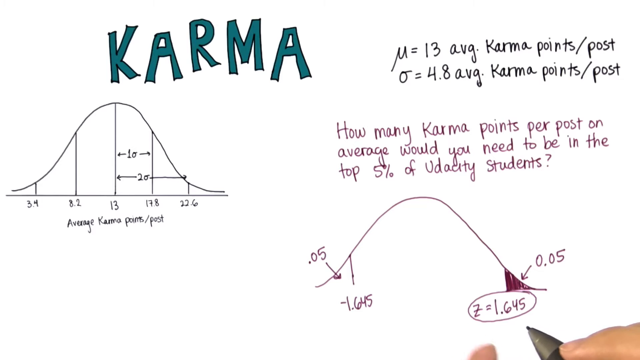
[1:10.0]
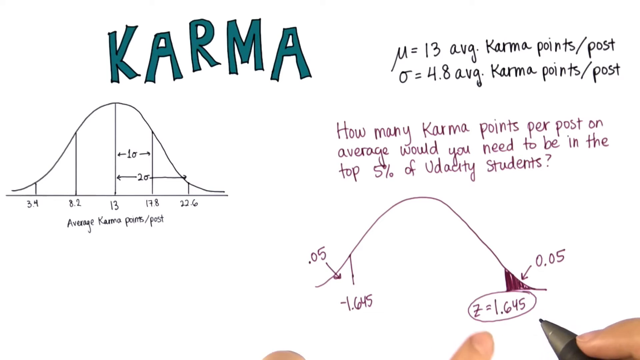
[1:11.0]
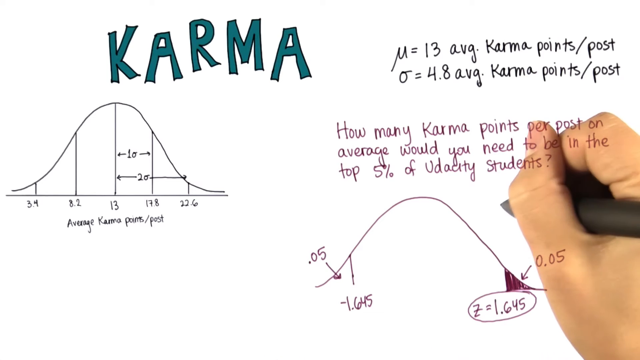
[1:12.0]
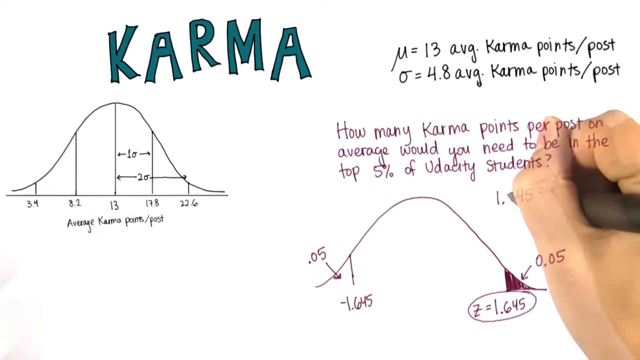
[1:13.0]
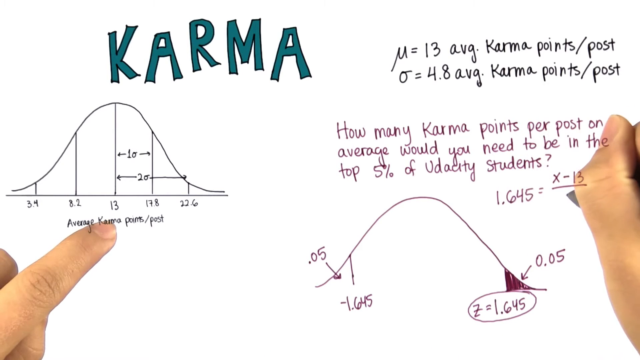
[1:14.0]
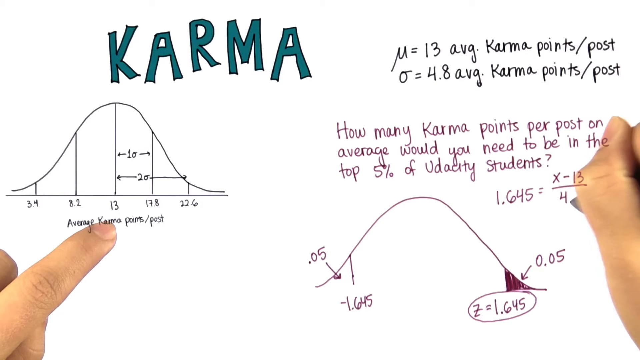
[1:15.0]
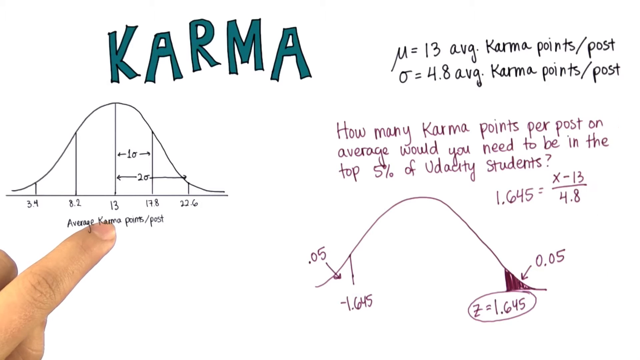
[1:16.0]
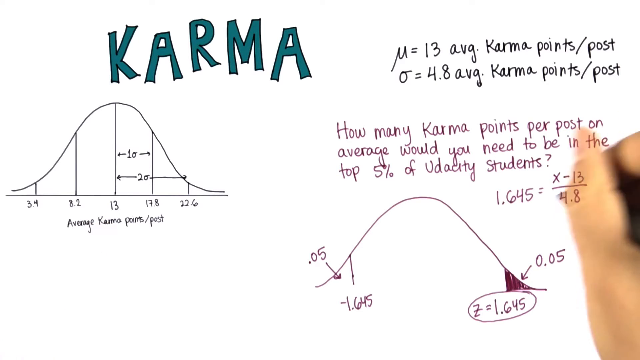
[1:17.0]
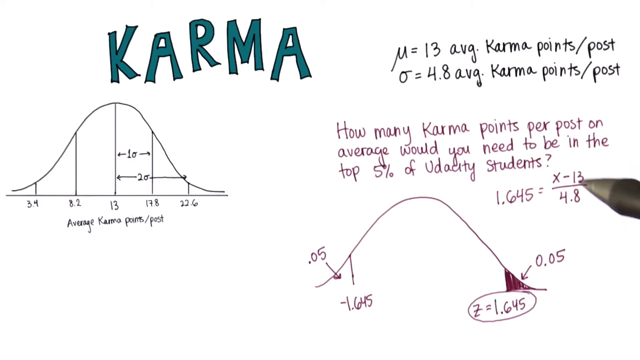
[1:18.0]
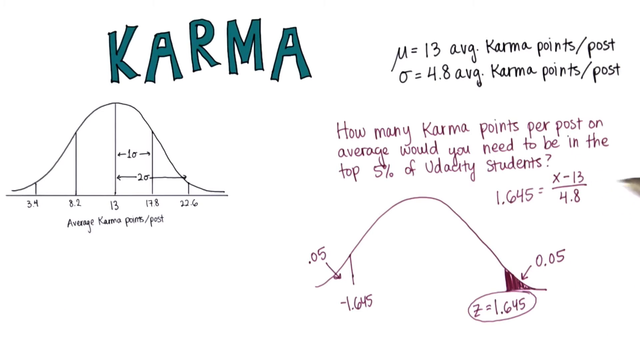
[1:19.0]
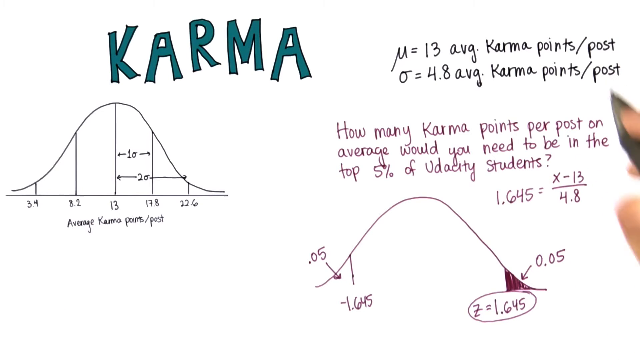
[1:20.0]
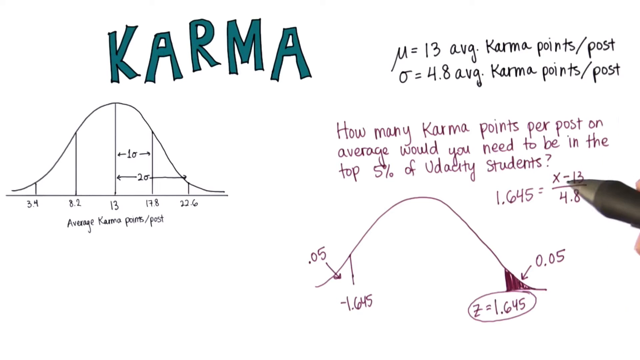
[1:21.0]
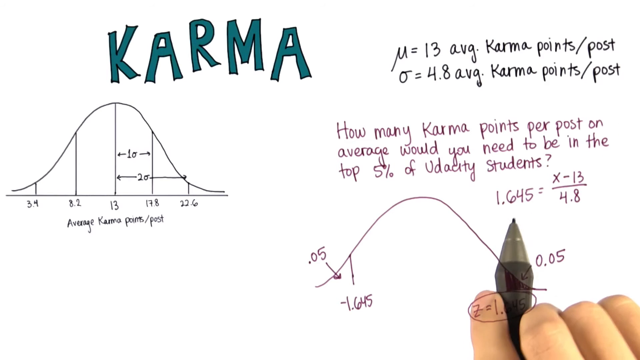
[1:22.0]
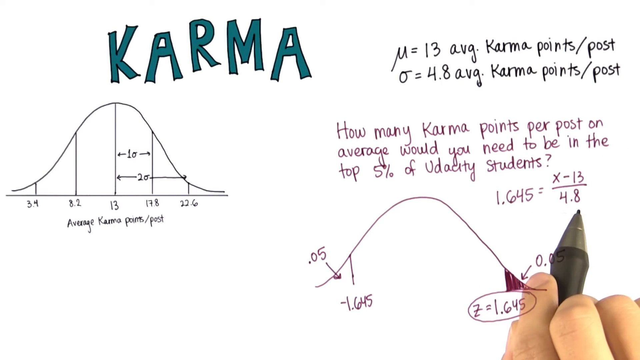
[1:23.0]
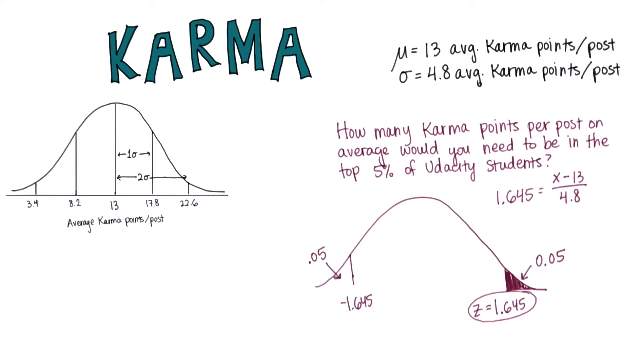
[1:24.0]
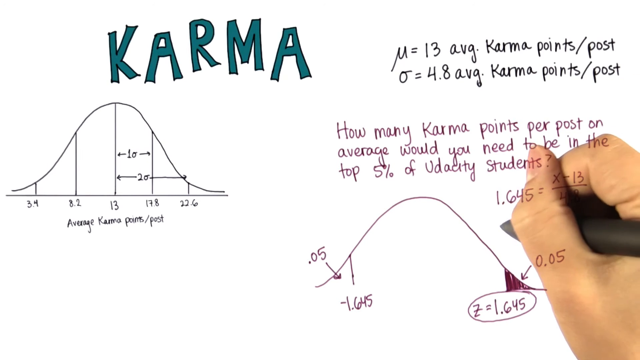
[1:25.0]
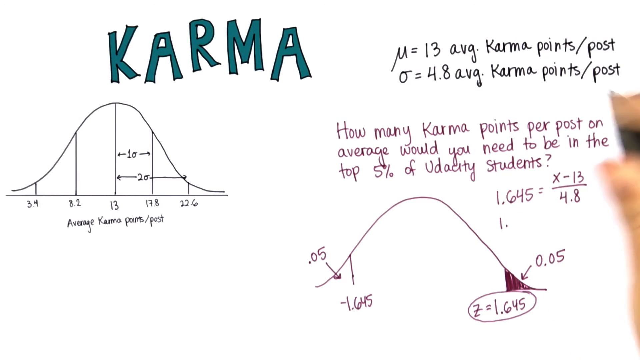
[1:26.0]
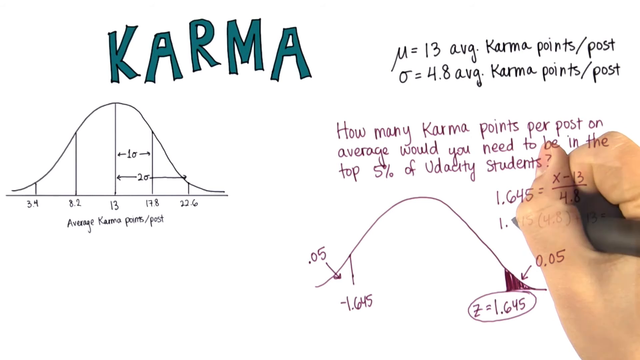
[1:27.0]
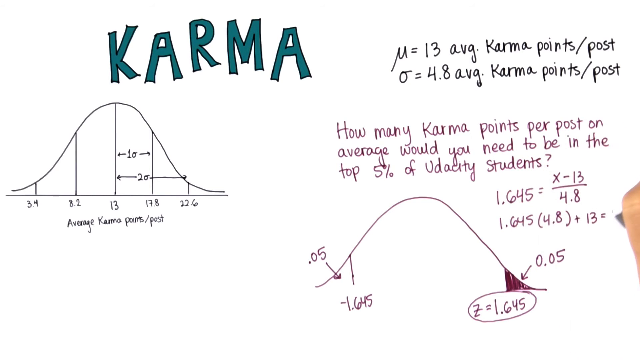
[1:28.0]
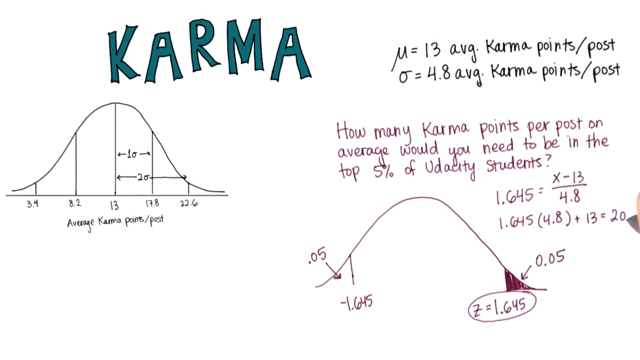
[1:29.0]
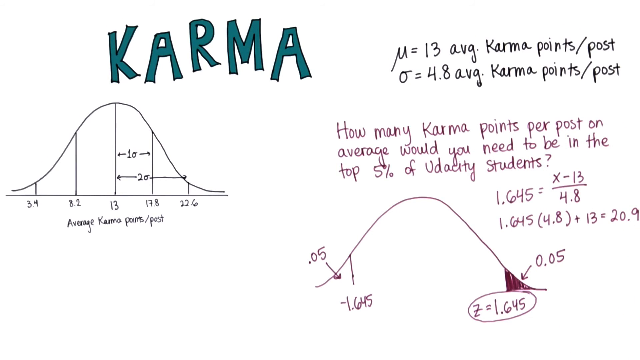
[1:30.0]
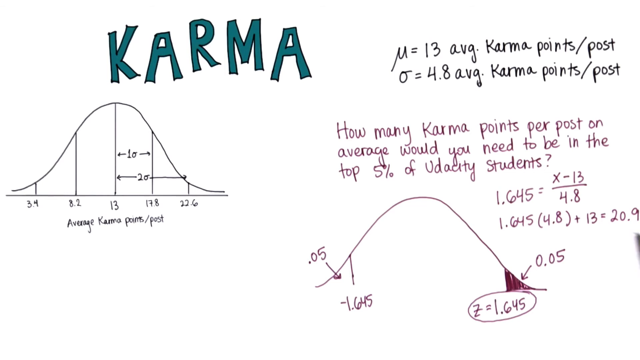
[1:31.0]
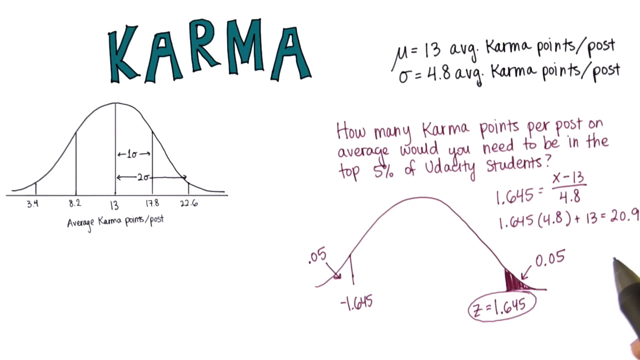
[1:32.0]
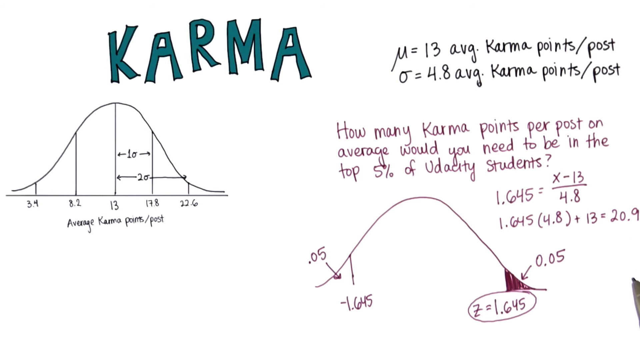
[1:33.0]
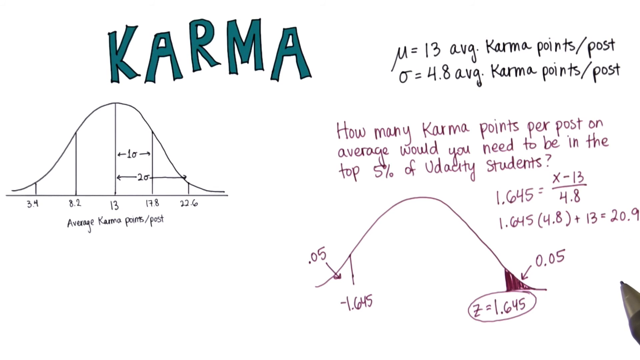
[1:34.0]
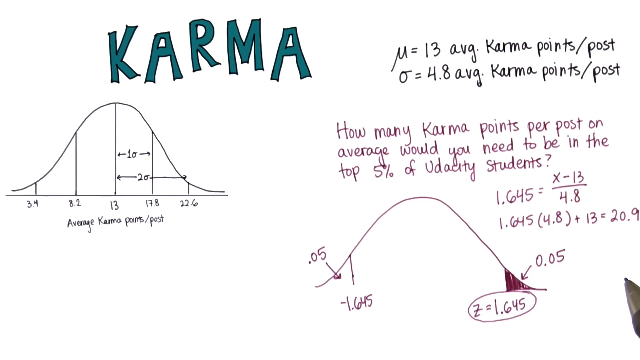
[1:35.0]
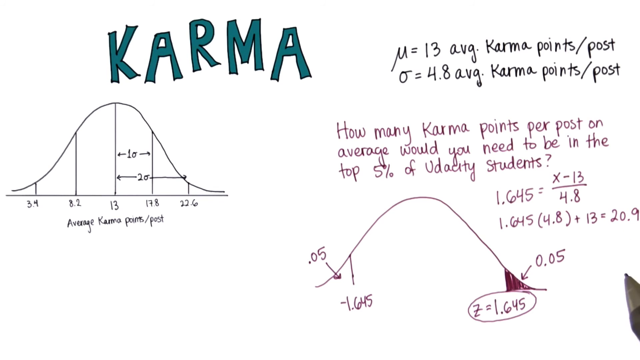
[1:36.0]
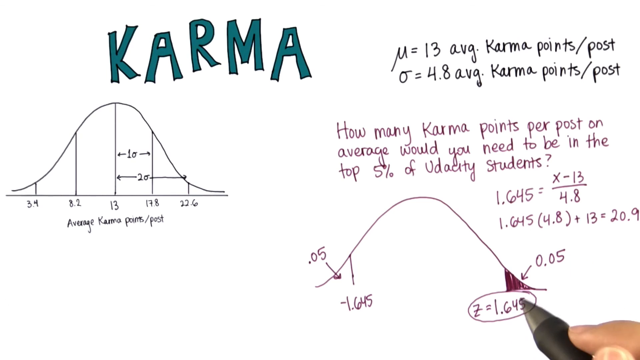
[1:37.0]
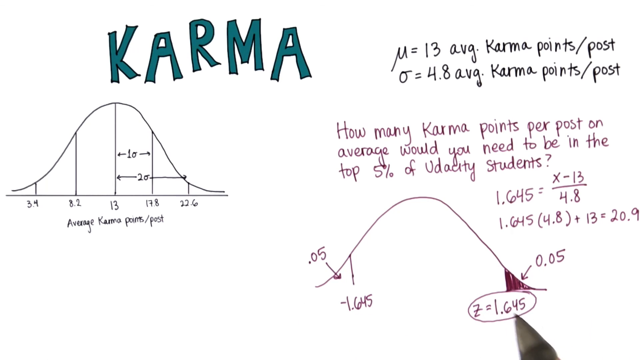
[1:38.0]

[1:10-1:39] The assignment shows the word "karma" written in a blue font, with average karma points per post ranging from 3.5 to 22.6 and an average of 13. It states U equals 13 average karma points per post and O equals 4.8 average karma points per post, followed by the question "how many karma points per post on average would you need to be in the top 5 of Udacity students." An equation reads 1.645 equals x minus 13, all divided by 4.8. He has created a separate graph in which 0.05 is at the bottom left, marked minus 1.645, and 0.05 is at the bottom right, marked 1.645. He then writes another equation: 1.645 times 4.8 plus 13 equals 20.9.